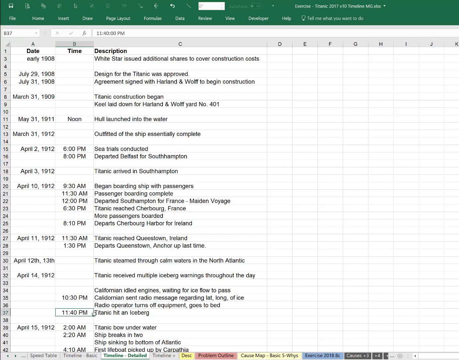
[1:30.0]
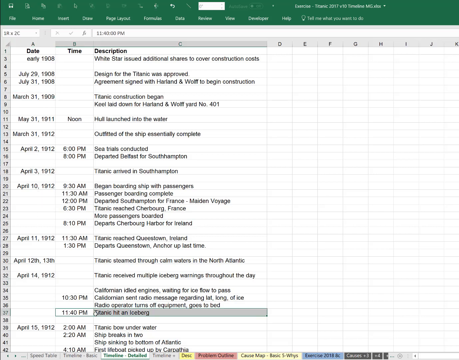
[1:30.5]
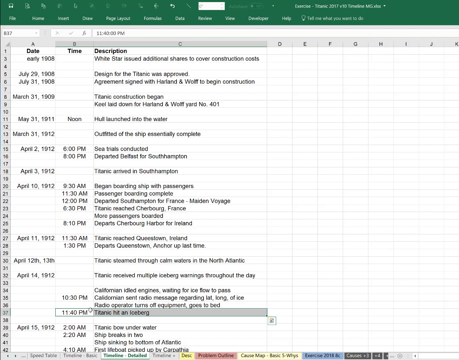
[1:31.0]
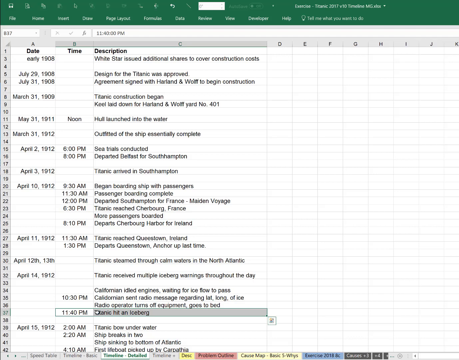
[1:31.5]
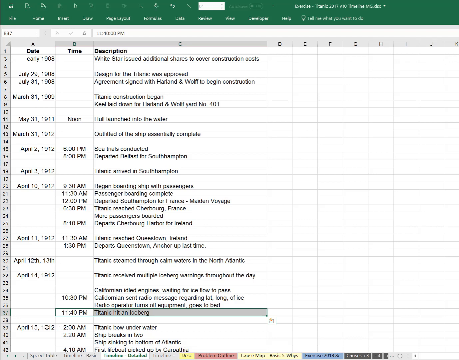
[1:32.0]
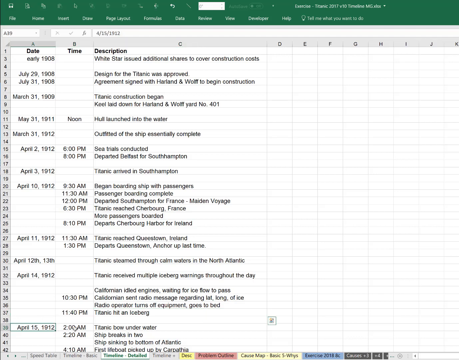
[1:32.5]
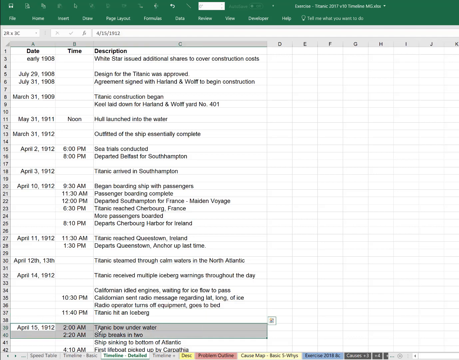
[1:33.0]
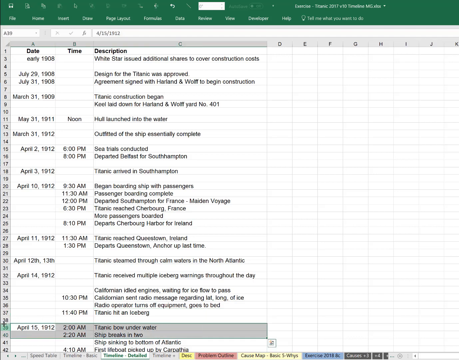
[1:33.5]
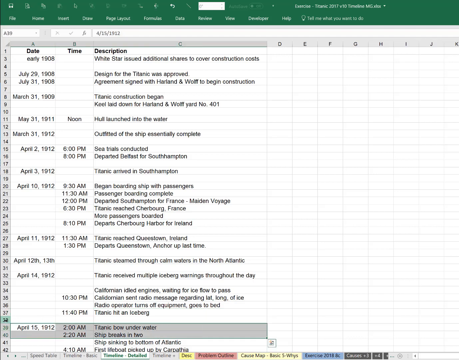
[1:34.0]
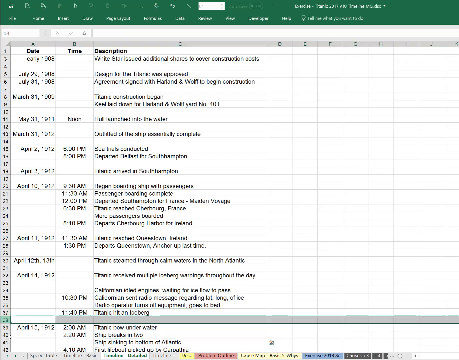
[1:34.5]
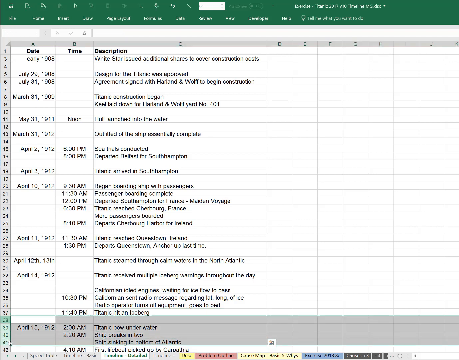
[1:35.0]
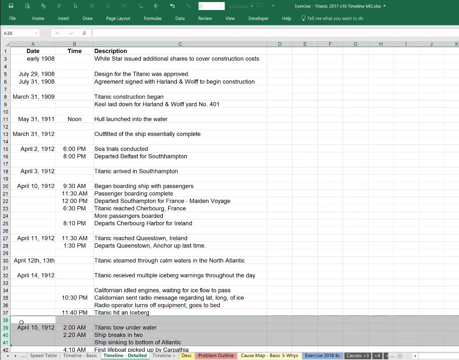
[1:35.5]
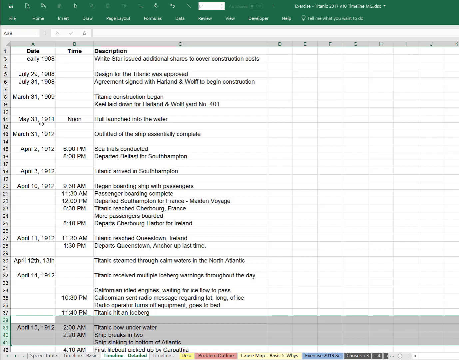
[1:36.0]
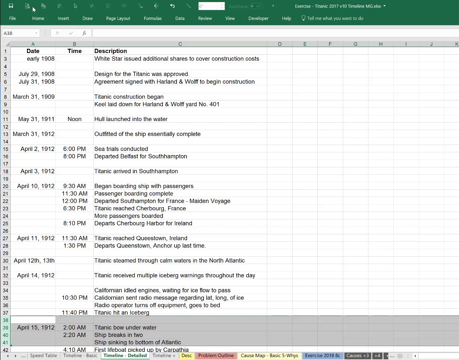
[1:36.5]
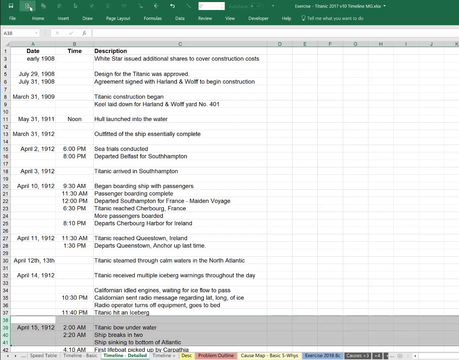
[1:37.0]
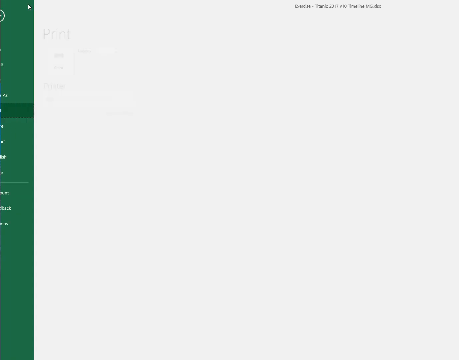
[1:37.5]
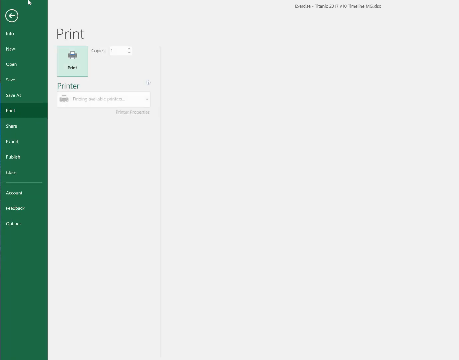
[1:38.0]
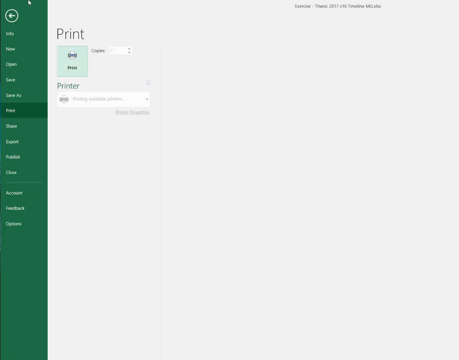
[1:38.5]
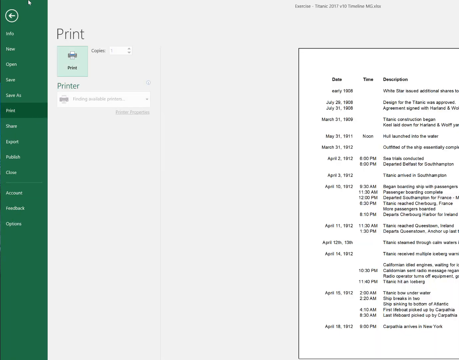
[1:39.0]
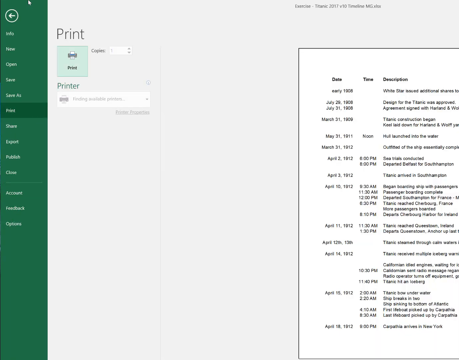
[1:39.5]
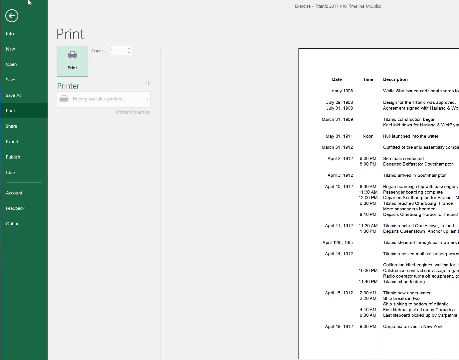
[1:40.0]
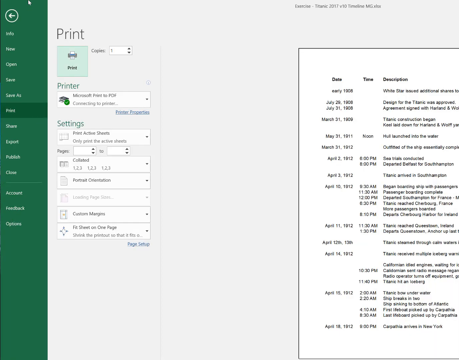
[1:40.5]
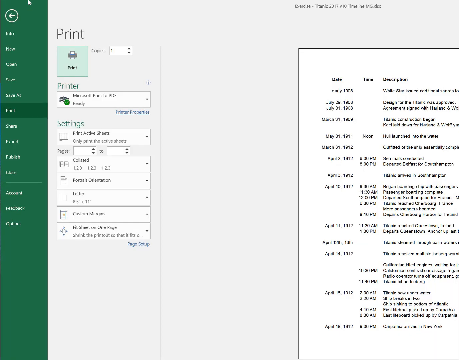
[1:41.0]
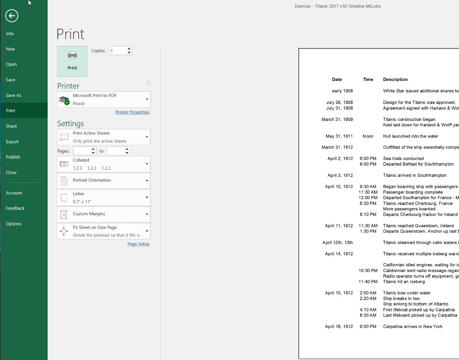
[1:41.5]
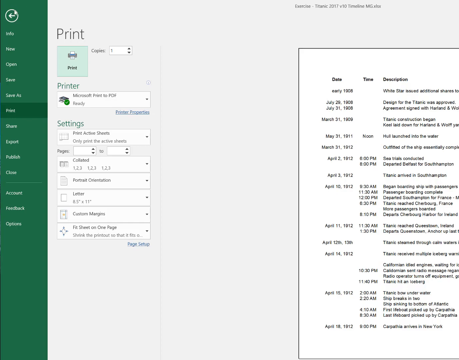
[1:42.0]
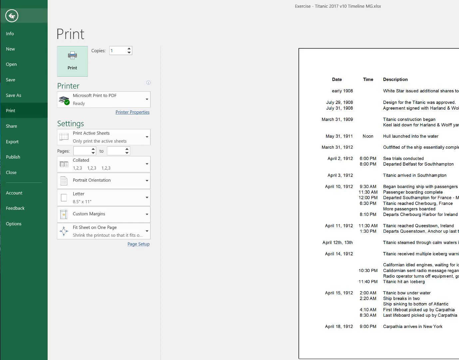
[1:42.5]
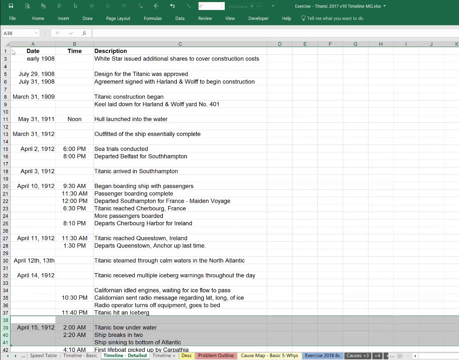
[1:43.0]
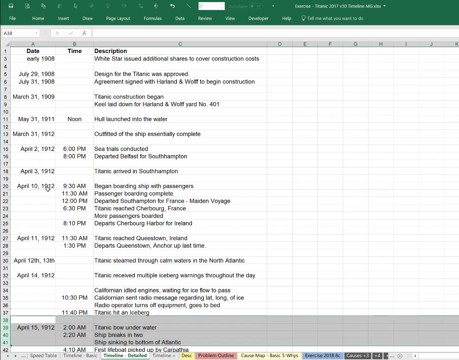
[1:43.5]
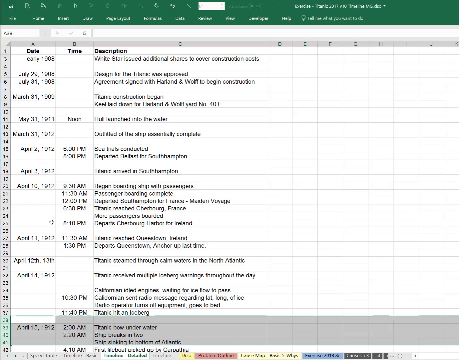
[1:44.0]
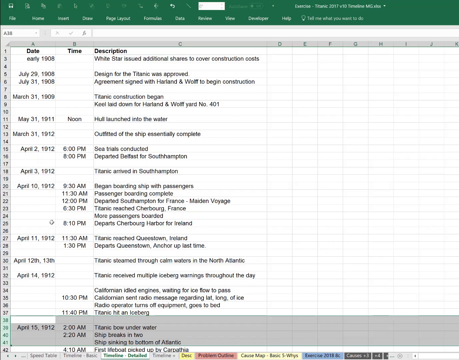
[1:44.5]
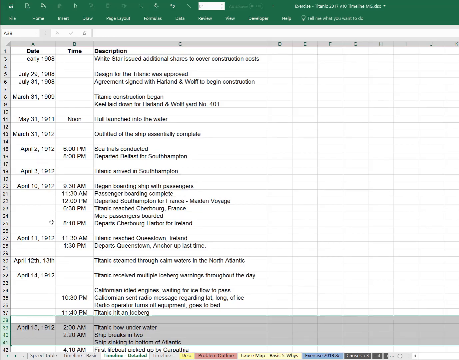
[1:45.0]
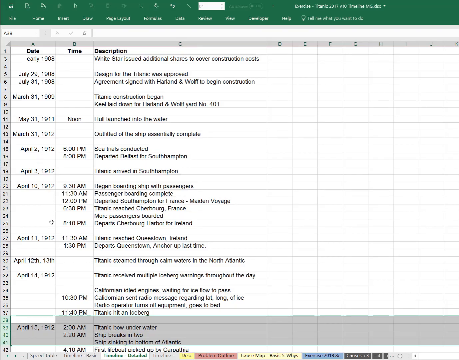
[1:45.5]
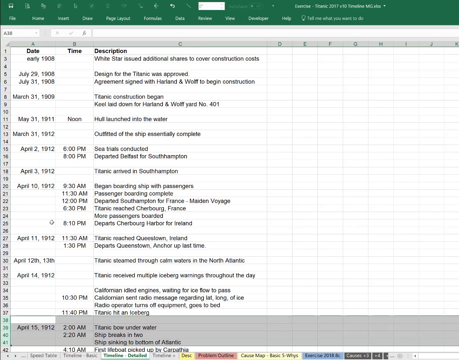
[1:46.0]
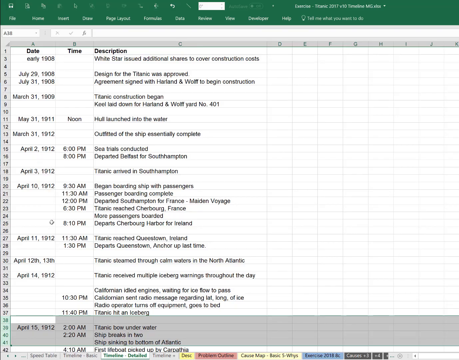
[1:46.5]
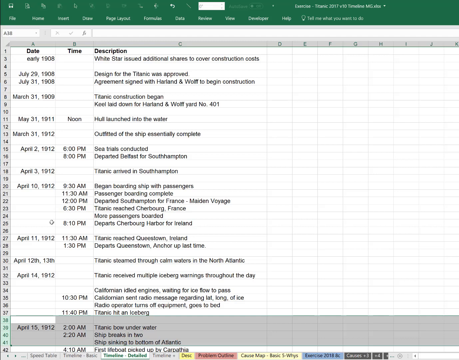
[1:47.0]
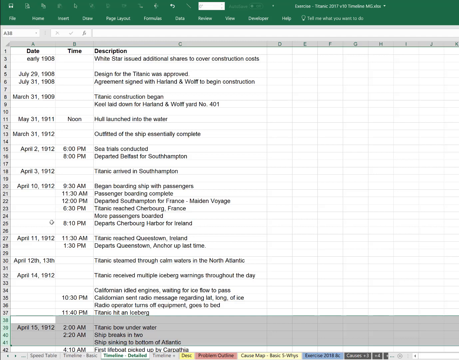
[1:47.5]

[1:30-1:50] The user clicks on 11.40pm, apparently in row 27, which has the description "Titanic hit an iceberg," and highlights the description for row 27. They undo it and instead highlight row 39, which has the description "Titanic bow underwater" at 2 a.m., followed by "ship breaks in two" at 220; these are dated April 15, 1912, and occupy rows 39 and 40. They then highlight from row 38 down to row 41, including "ship sinking to bottom of Atlantic." Next they go to one of the menu ribbons at the top, apparently for print, and a print browser appears. The document shows on the right side, and on the left pane under print there is a printer icon along with settings for paper, colored, format orientation, and copies. They make customizations, press the back button, and return to the Excel sheet.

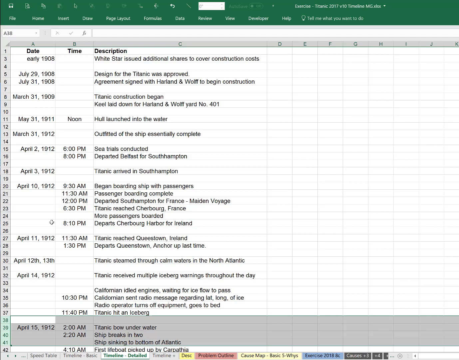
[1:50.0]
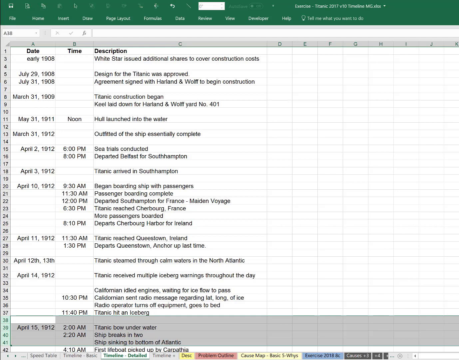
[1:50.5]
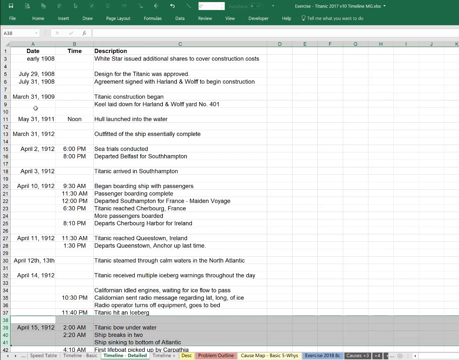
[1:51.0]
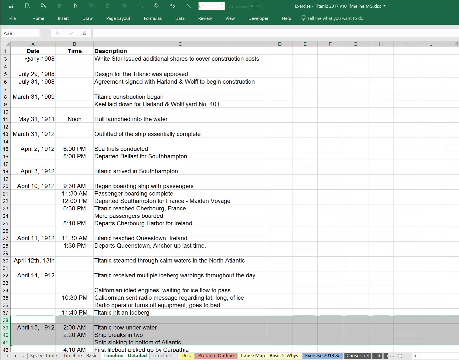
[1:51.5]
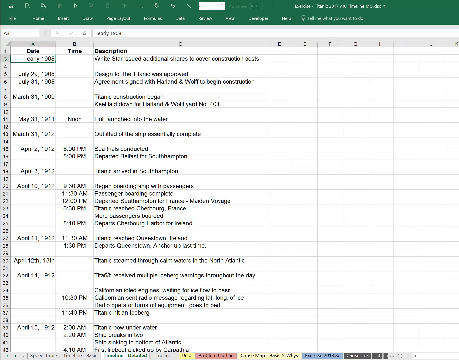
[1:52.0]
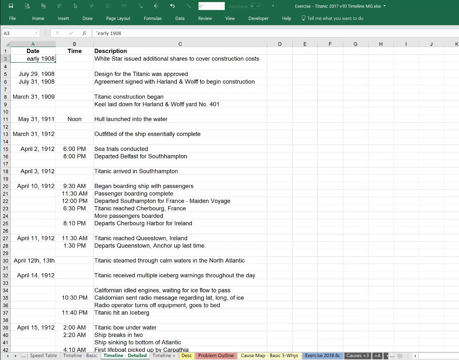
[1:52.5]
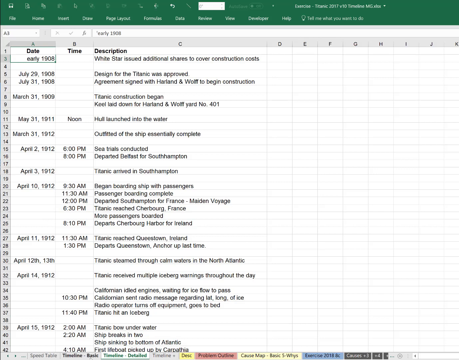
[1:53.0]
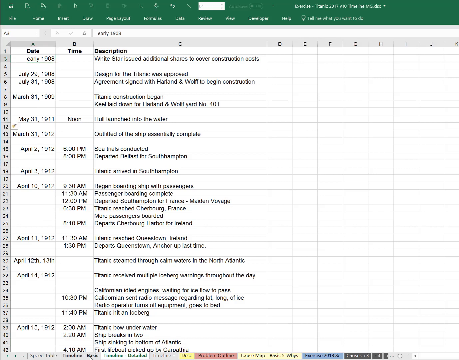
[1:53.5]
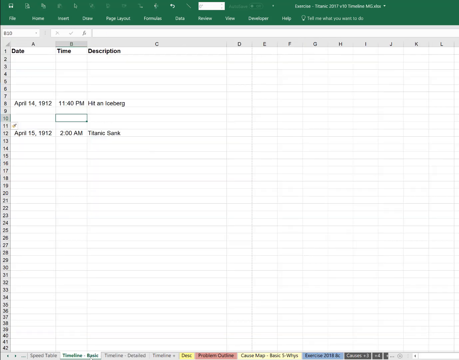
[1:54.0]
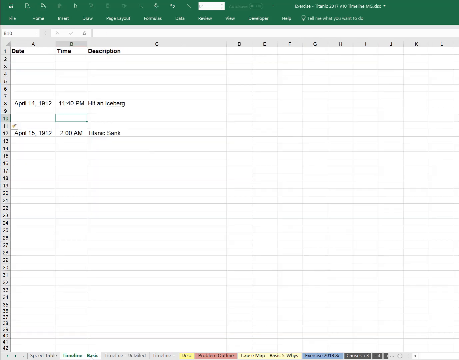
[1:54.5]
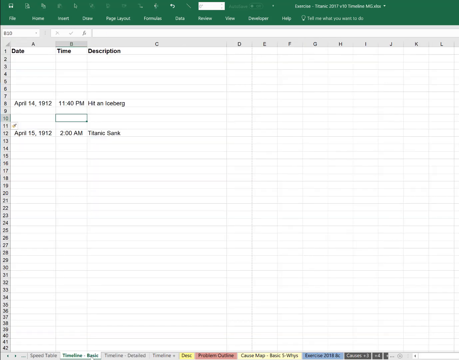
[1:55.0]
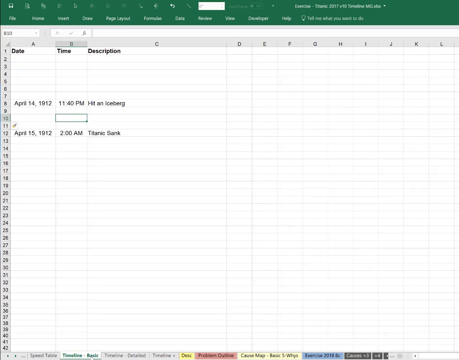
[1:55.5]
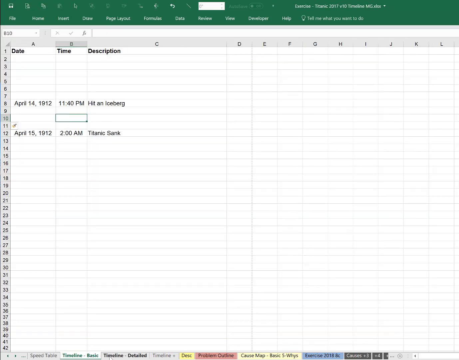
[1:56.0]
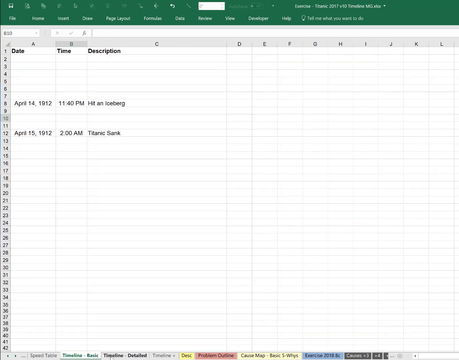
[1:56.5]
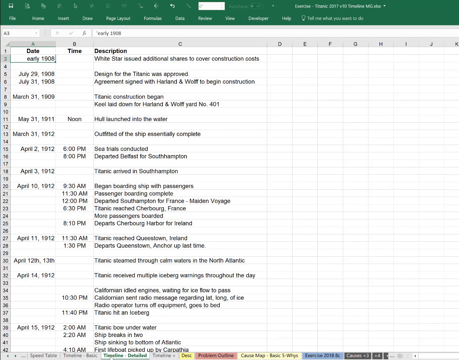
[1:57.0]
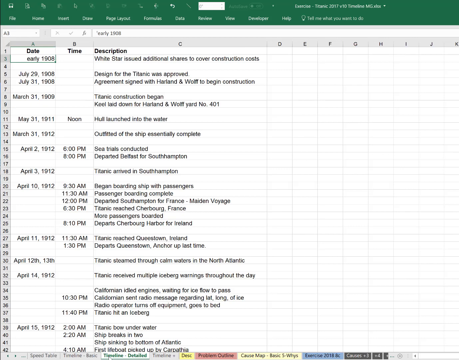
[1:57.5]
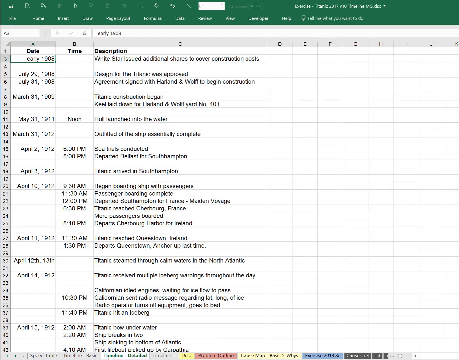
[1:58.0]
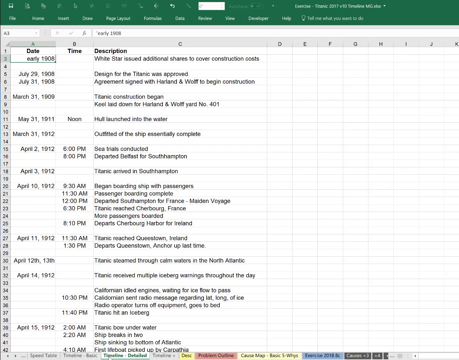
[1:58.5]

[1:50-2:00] The user hovers around row 2 and clicks on it, then apparently opens another document: the first document, which has text only in row 8 and row 12, with the highlight on column B and cell 10. The user then goes back to the other document with all the dates, times, and descriptions on the chart. Nothing else happens on the page.